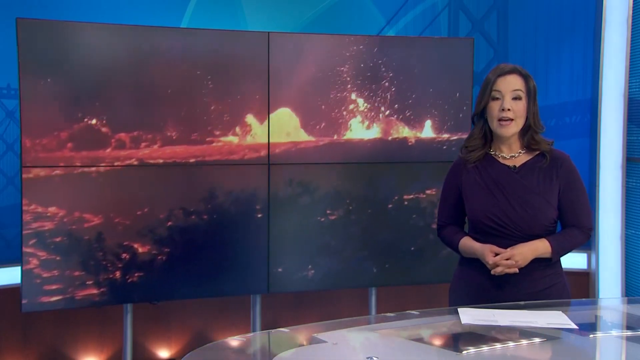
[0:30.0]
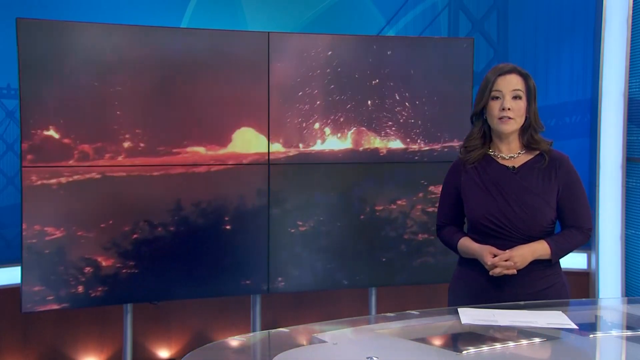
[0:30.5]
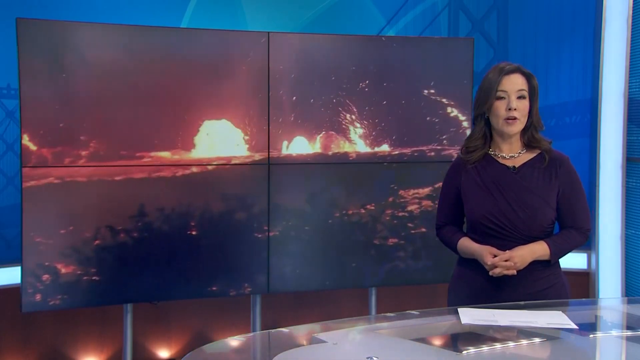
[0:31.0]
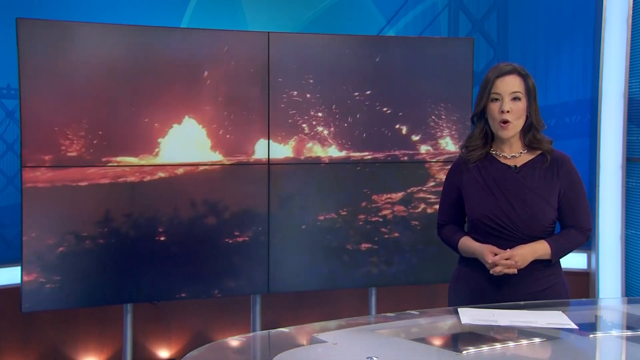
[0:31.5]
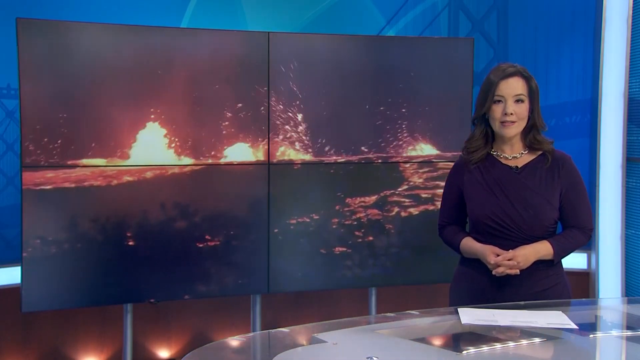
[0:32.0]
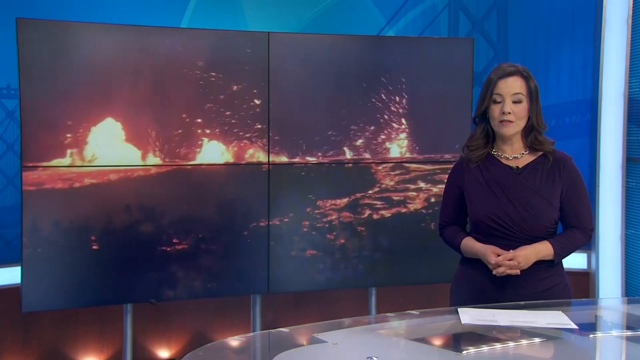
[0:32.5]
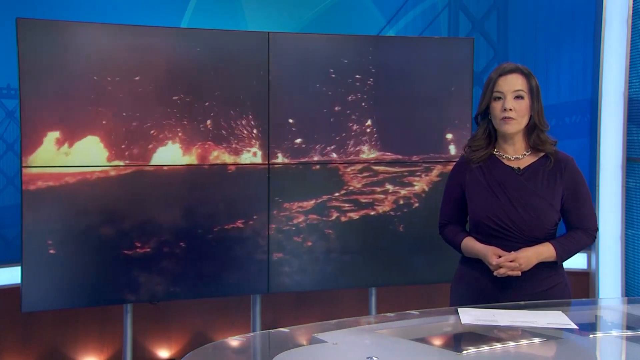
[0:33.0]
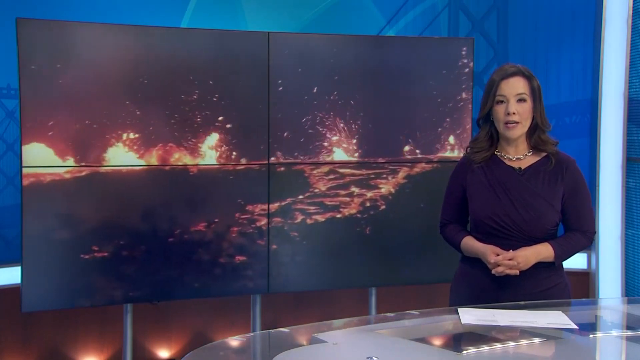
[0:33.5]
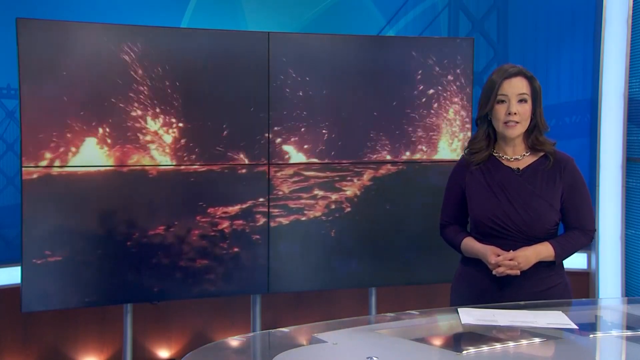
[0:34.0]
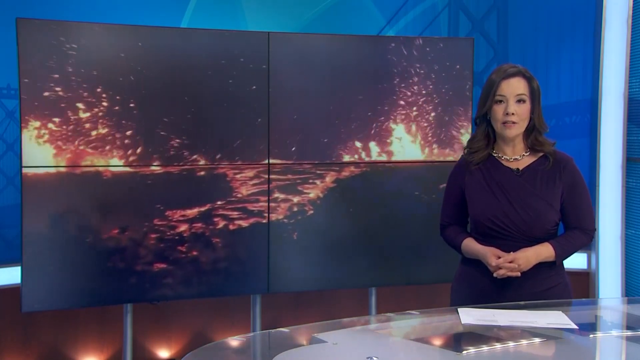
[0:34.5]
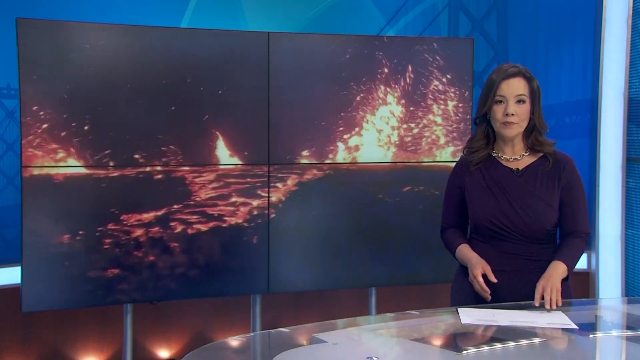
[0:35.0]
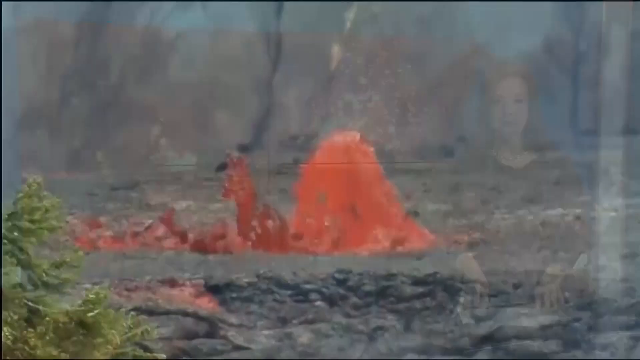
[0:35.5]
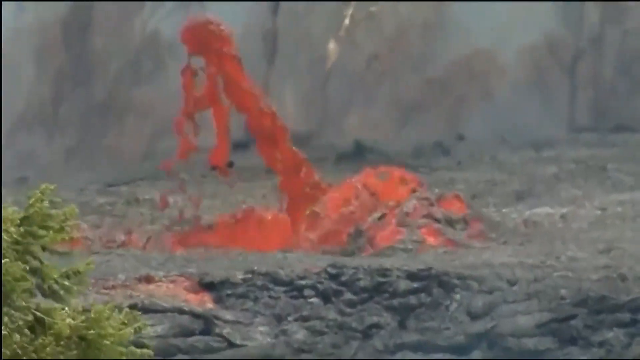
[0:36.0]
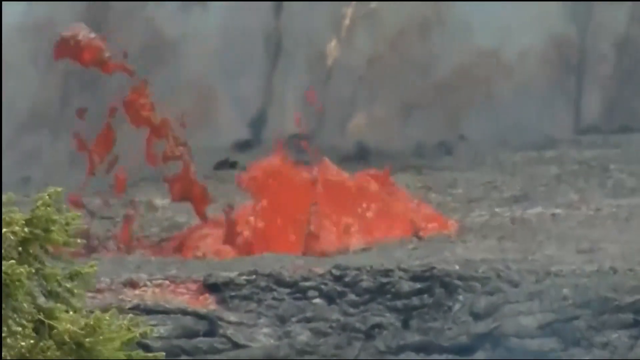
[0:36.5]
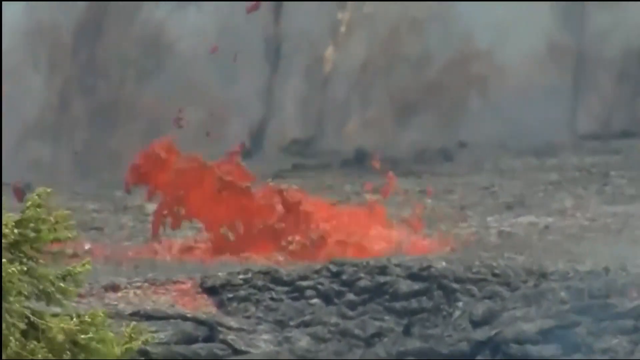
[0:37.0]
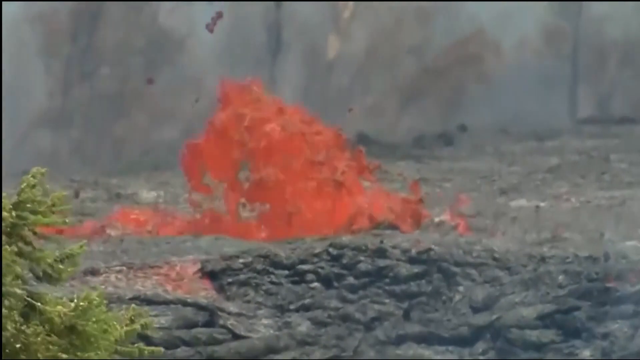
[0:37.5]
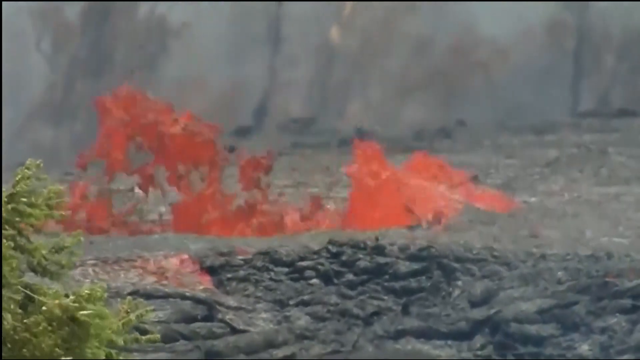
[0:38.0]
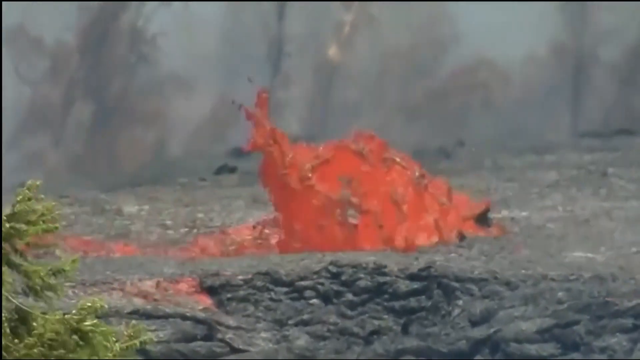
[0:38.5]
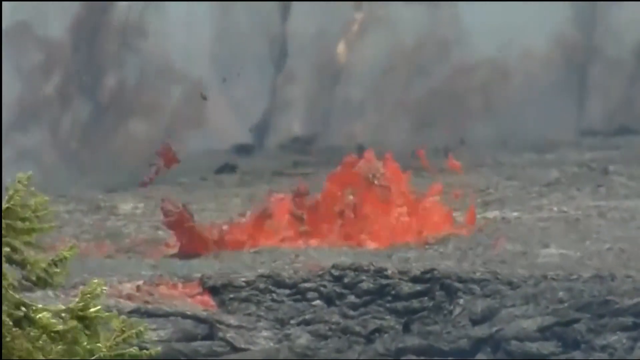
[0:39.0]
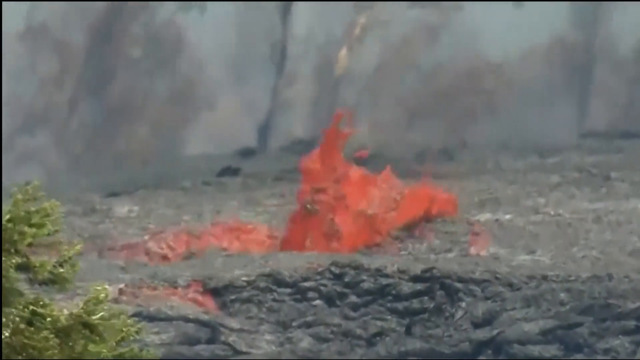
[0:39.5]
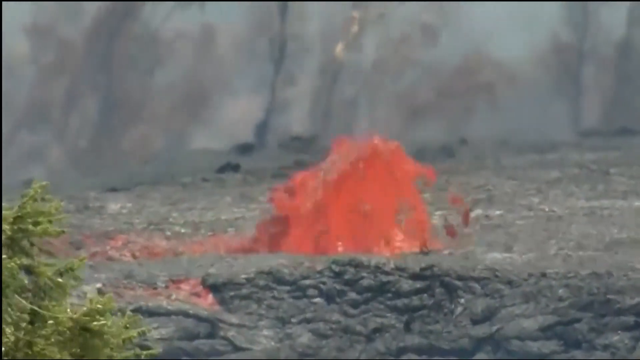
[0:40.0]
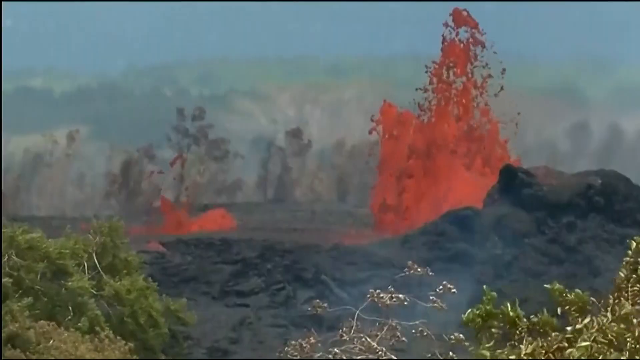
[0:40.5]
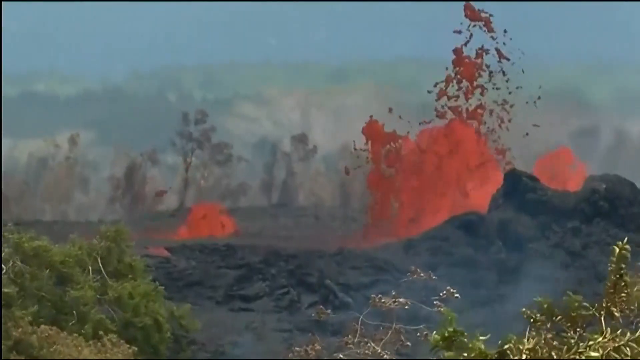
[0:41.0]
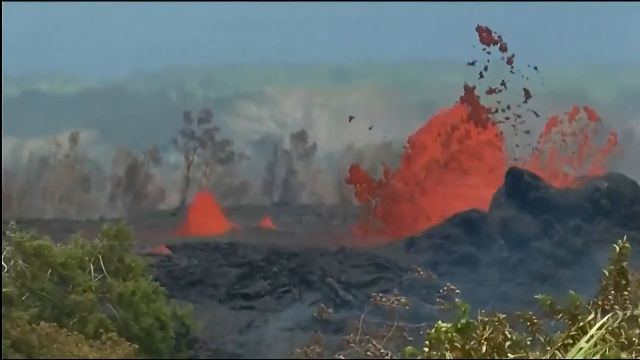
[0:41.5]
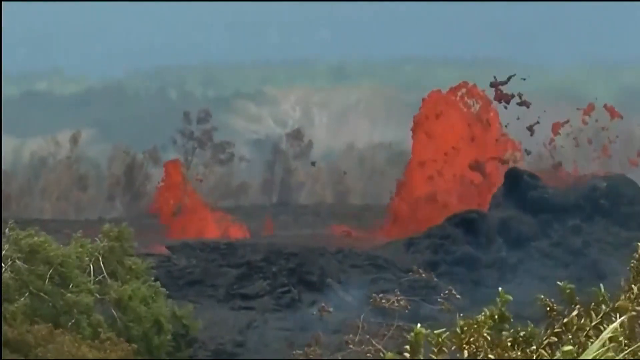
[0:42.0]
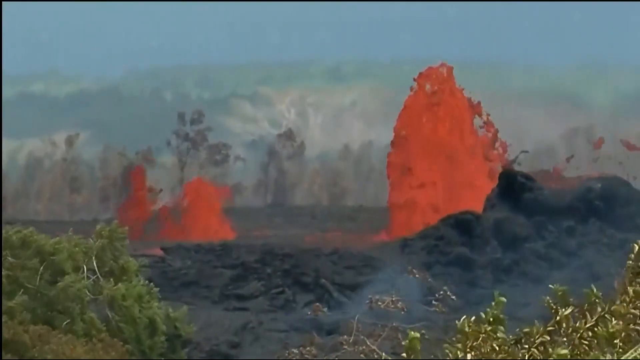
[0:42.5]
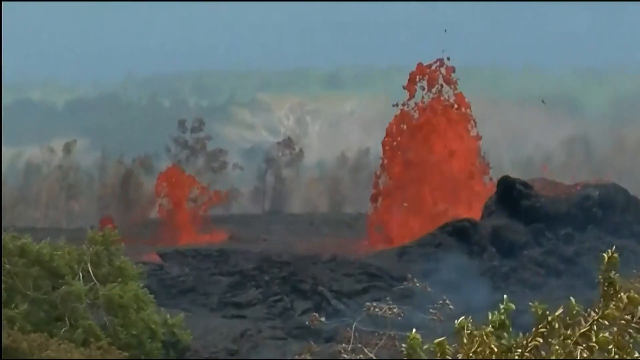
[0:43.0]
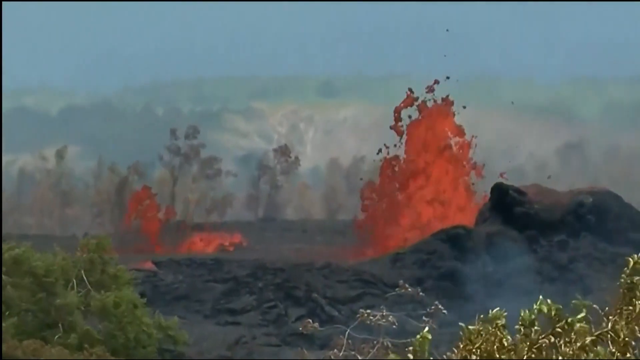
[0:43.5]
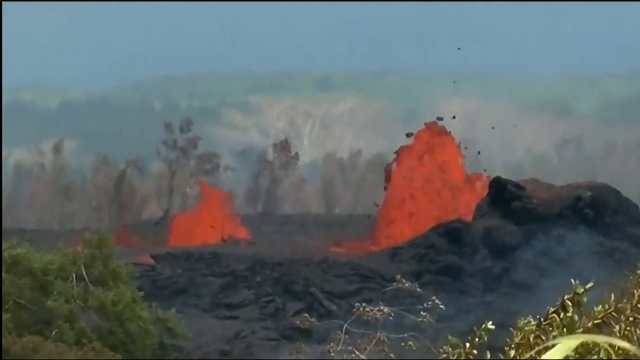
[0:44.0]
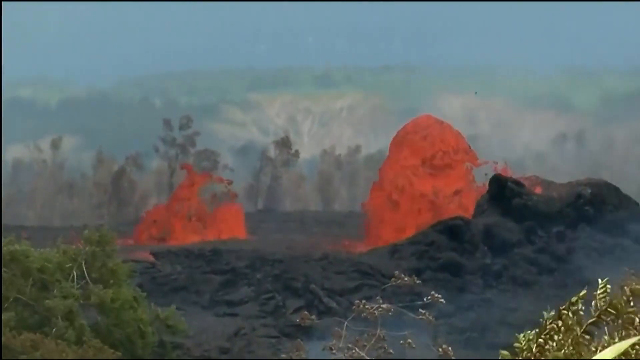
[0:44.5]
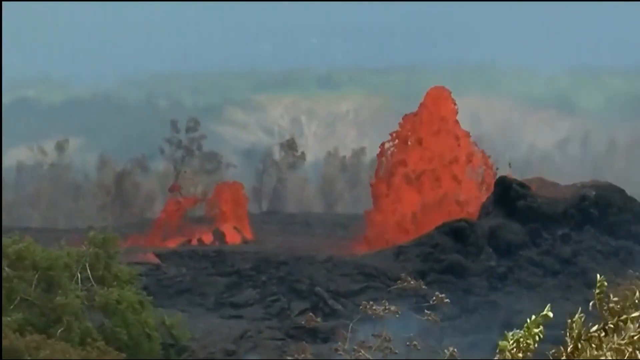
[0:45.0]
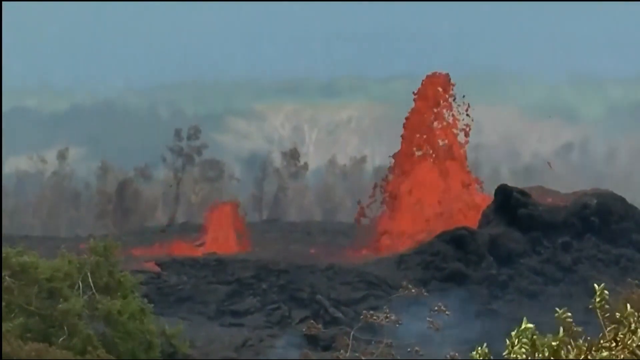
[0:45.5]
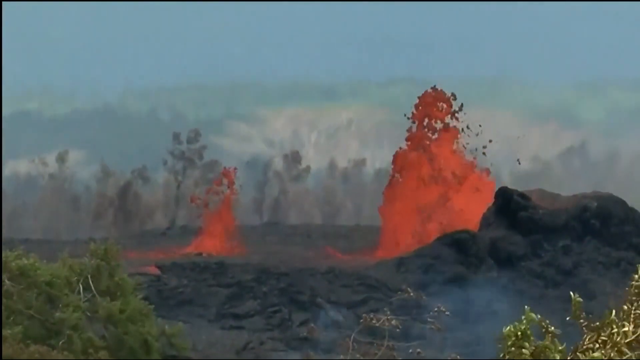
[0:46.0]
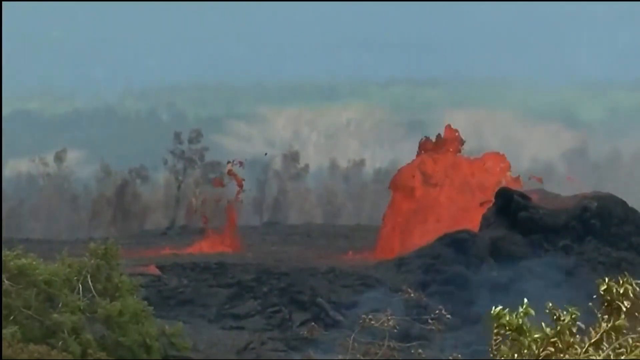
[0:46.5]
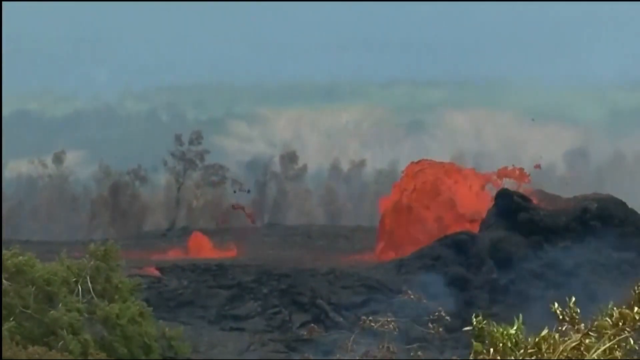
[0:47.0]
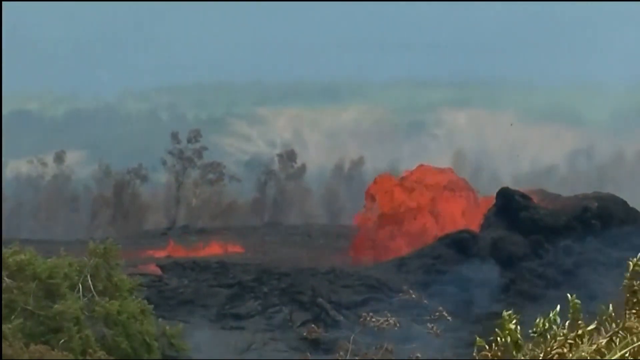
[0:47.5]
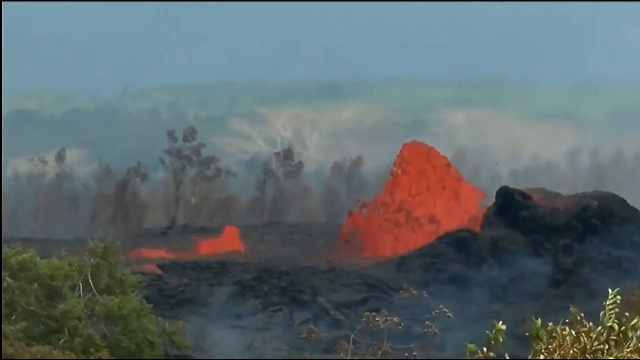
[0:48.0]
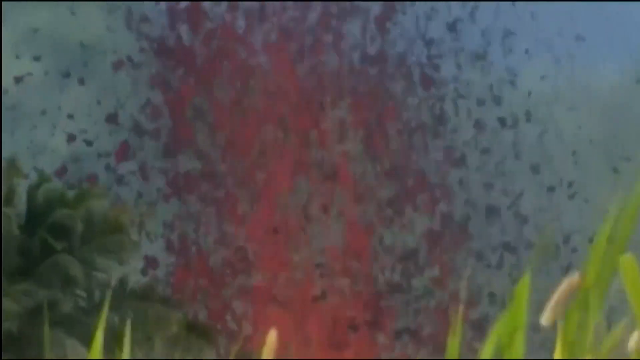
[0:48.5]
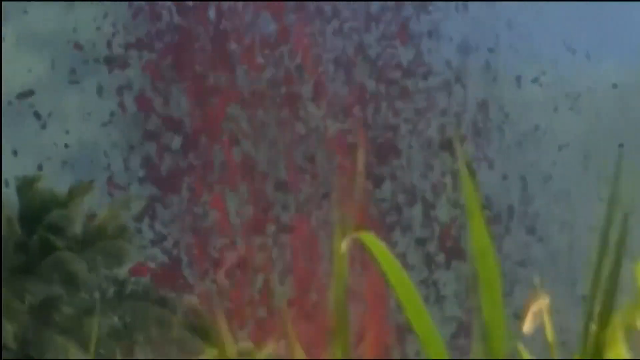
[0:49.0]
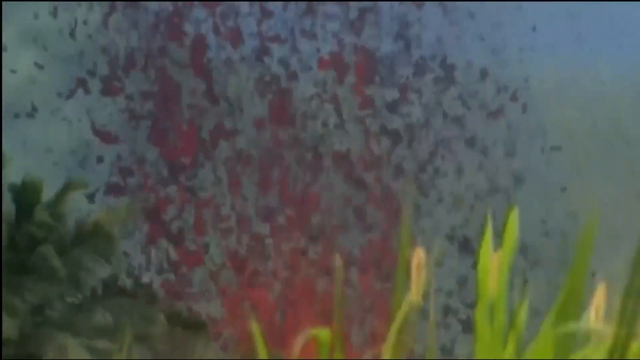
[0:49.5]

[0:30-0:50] In what looks like a news channel, a female reporter with dark brown hair, a gold necklace and a very dark purple top with three-quarter sleeves is on the right side of the screen. A screen or TV behind her on the left-hand side, taking up the majority of the screen, is split into four panels showing footage of what appears to be an intense volcanic eruption. The reporter is talking, and then the screen fades out to very up-close footage of lava and a lot of mud, with orange lava spewing from moving mud. The view zooms out a bit to show how far up the spouts of lava shoot into the air. Green foliage is off to the left side of the screen, and the sky behind the volcano is barely visible because of the smoke. Then a close-up shot of the volcano appears, with some grass in the foreground.